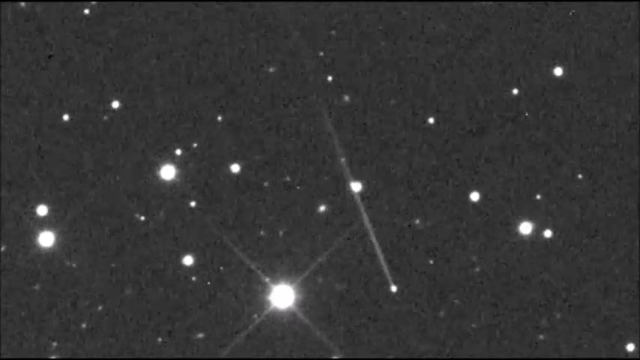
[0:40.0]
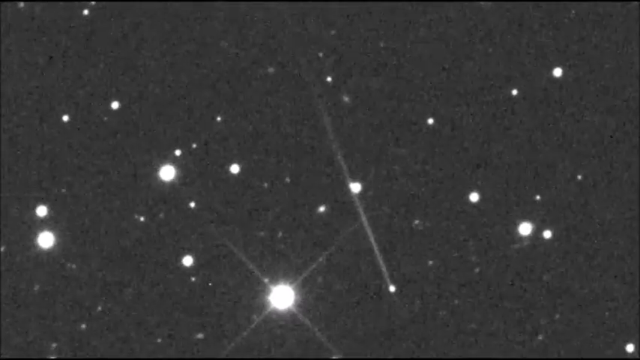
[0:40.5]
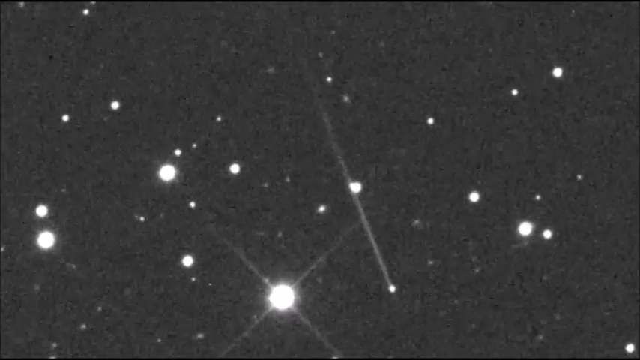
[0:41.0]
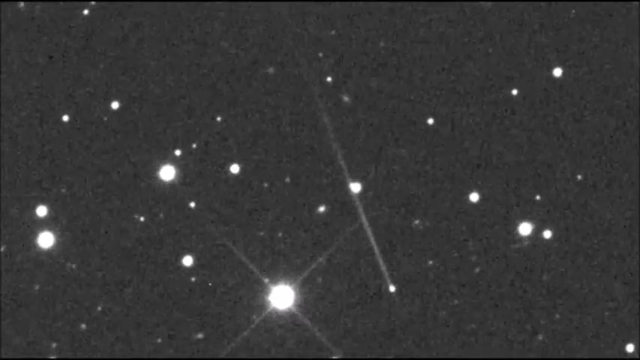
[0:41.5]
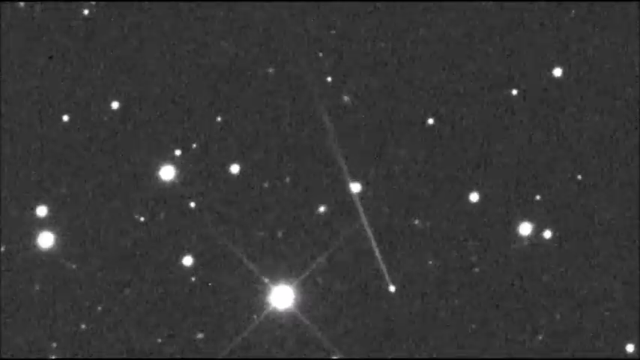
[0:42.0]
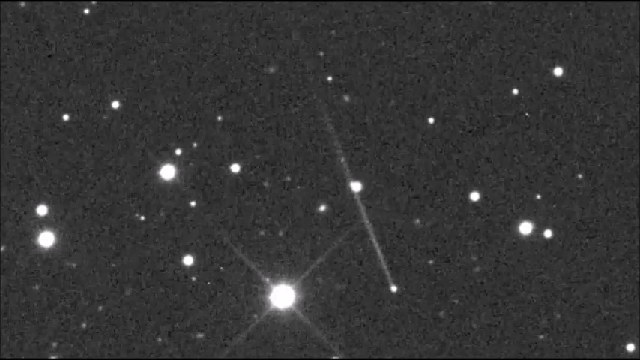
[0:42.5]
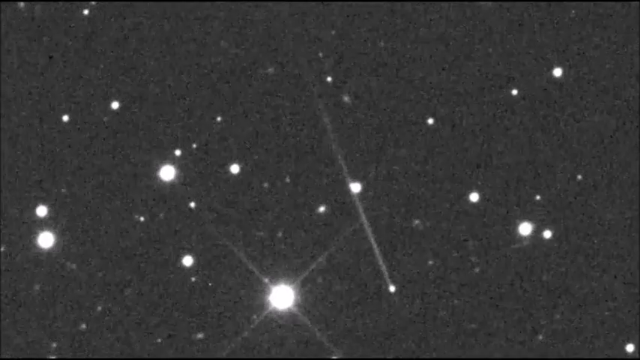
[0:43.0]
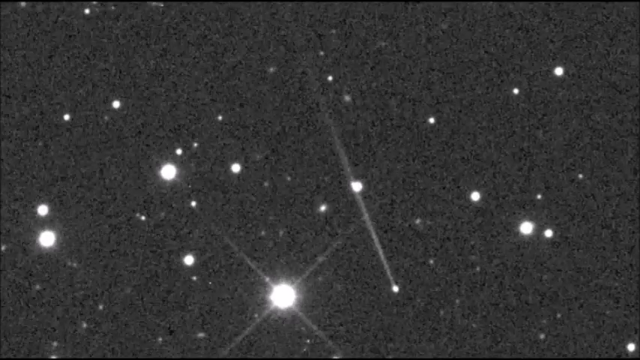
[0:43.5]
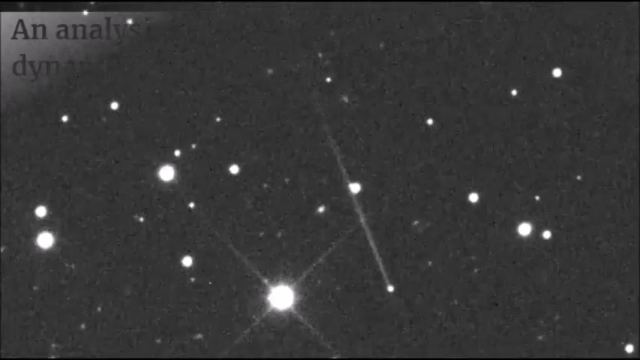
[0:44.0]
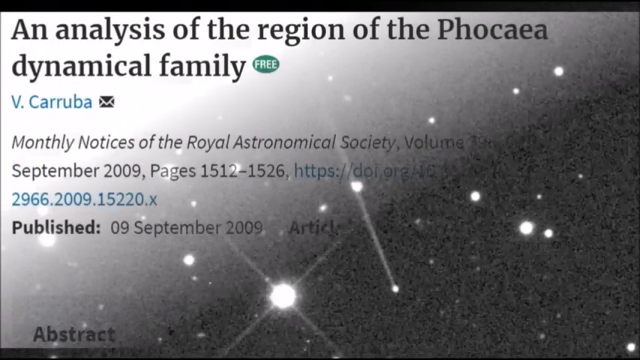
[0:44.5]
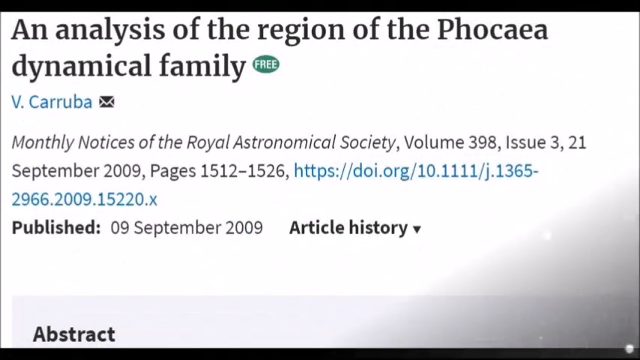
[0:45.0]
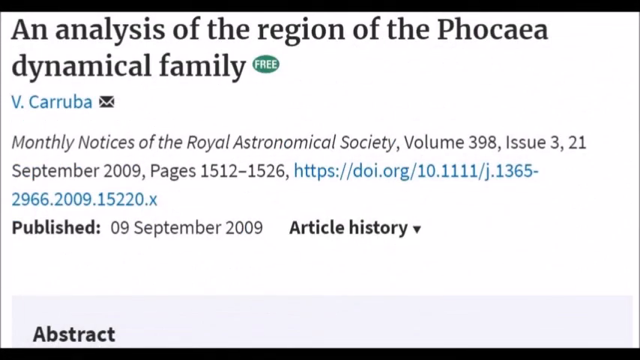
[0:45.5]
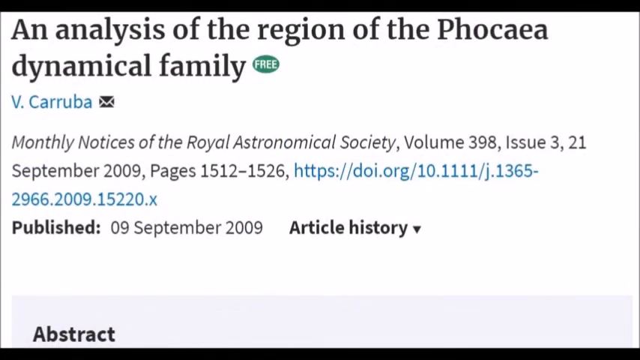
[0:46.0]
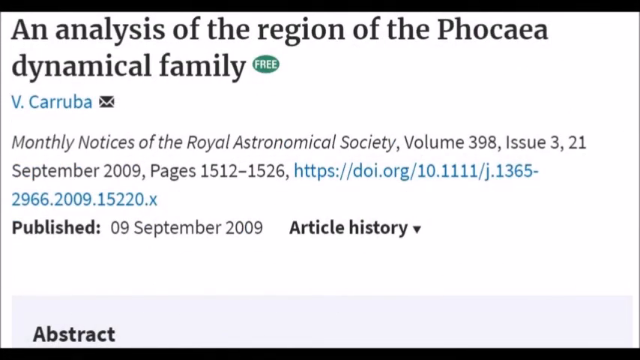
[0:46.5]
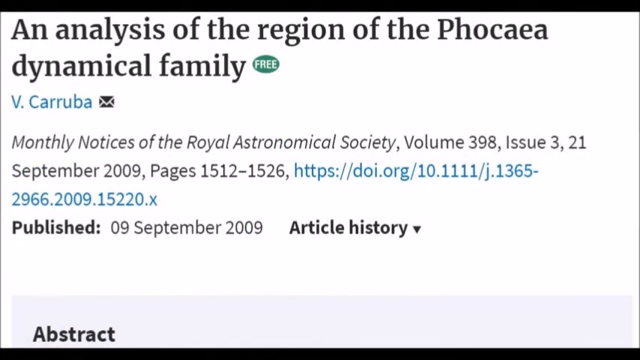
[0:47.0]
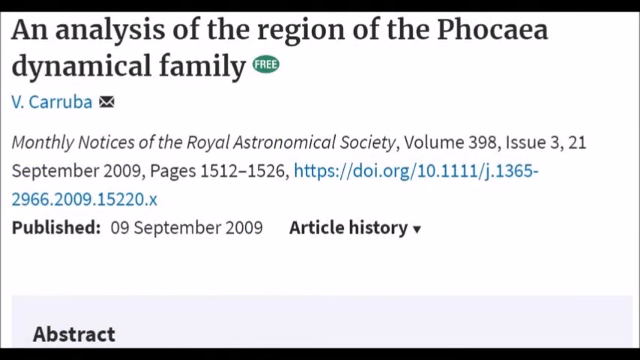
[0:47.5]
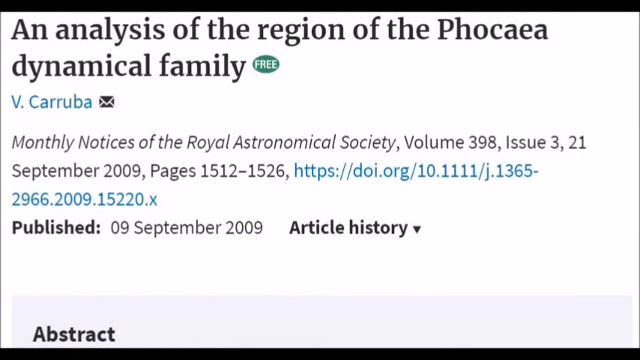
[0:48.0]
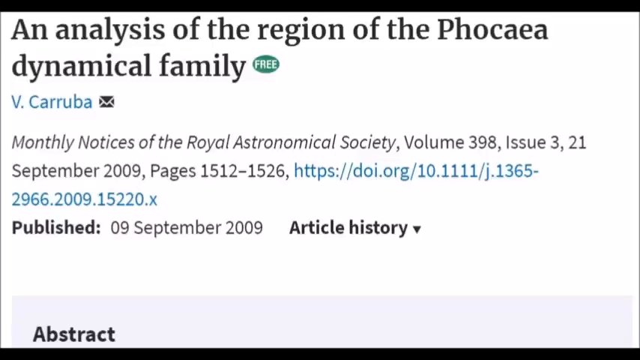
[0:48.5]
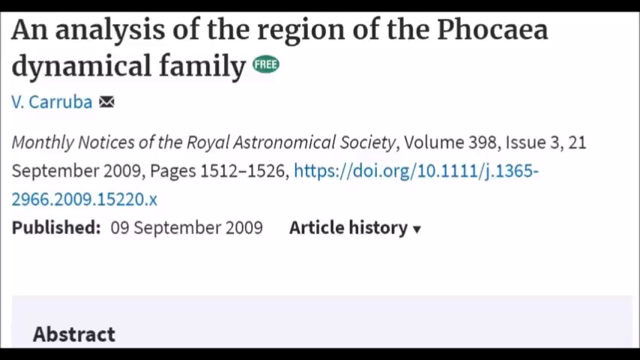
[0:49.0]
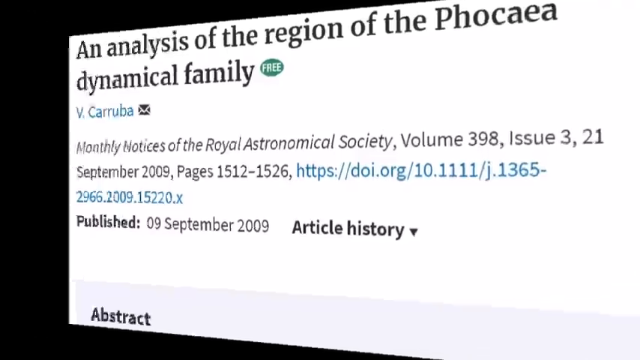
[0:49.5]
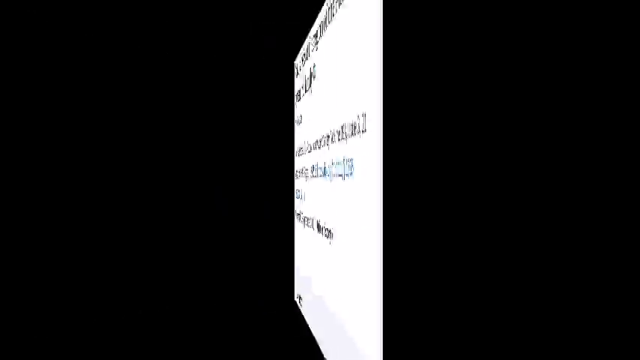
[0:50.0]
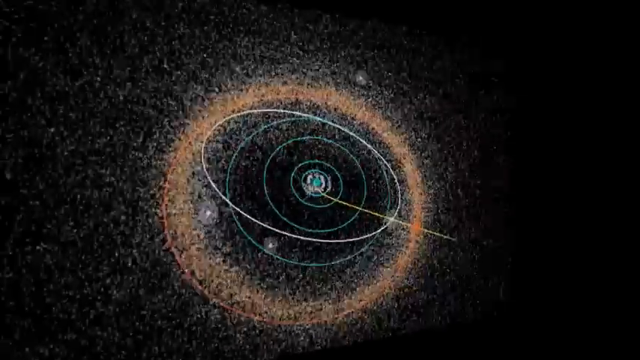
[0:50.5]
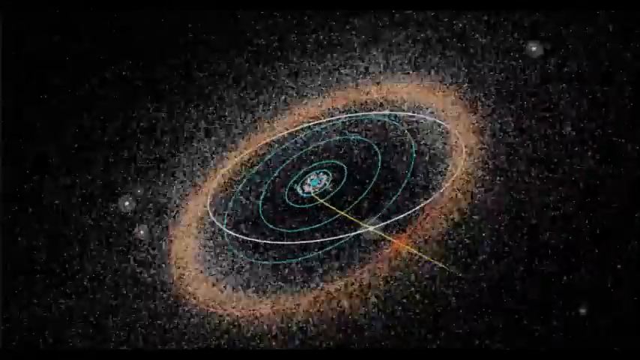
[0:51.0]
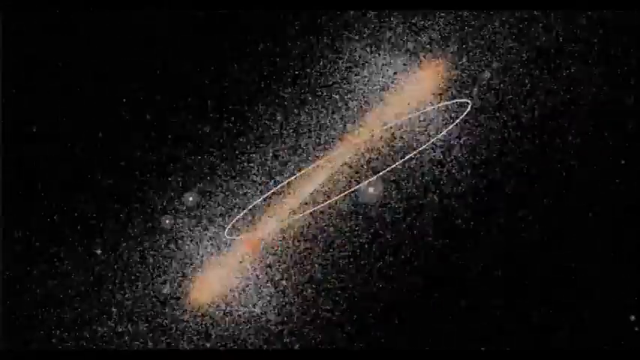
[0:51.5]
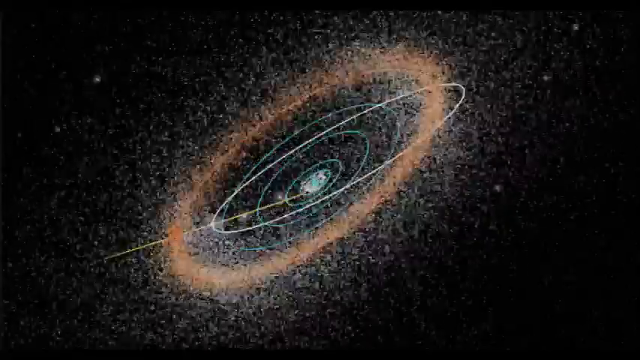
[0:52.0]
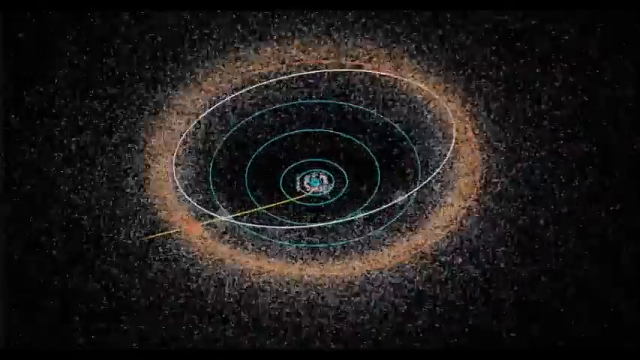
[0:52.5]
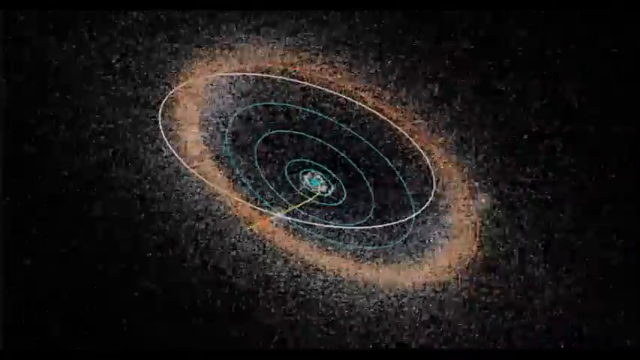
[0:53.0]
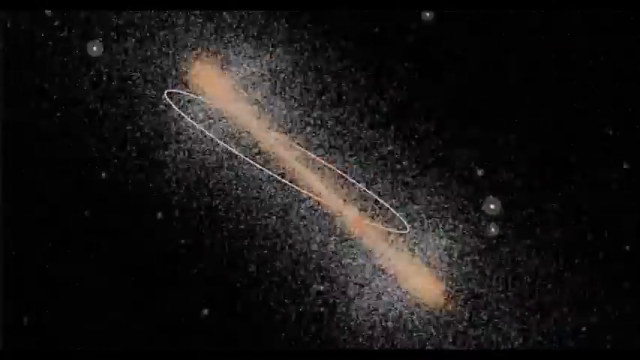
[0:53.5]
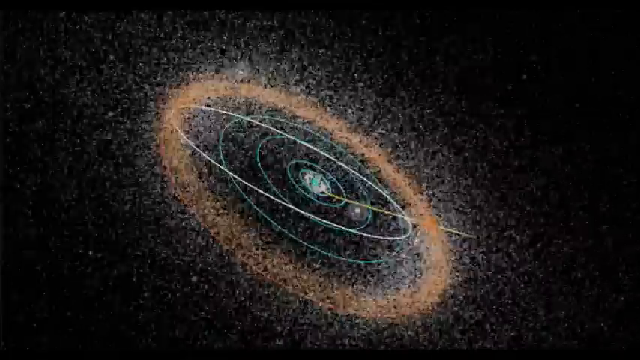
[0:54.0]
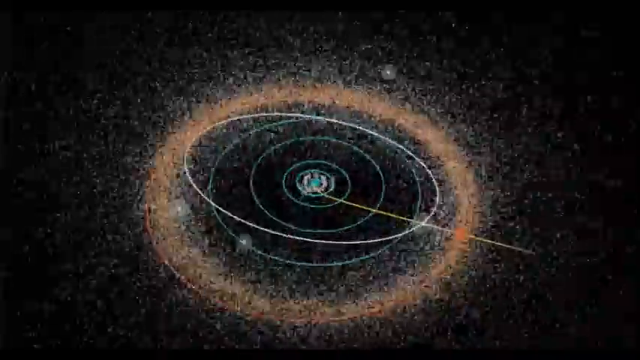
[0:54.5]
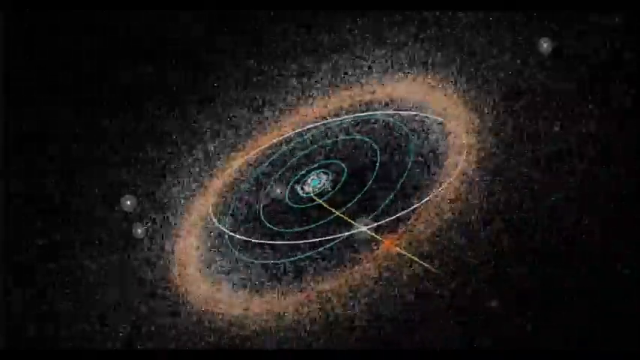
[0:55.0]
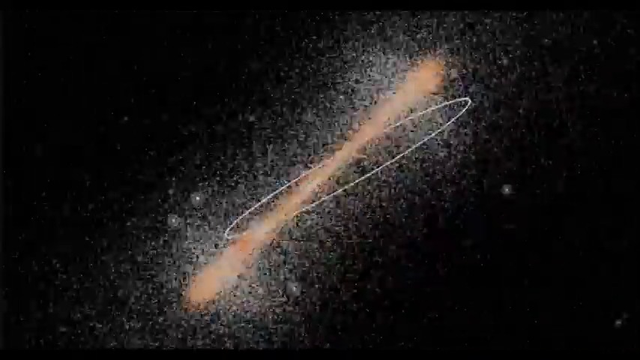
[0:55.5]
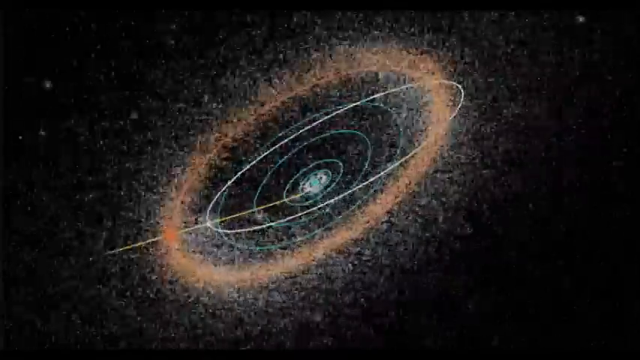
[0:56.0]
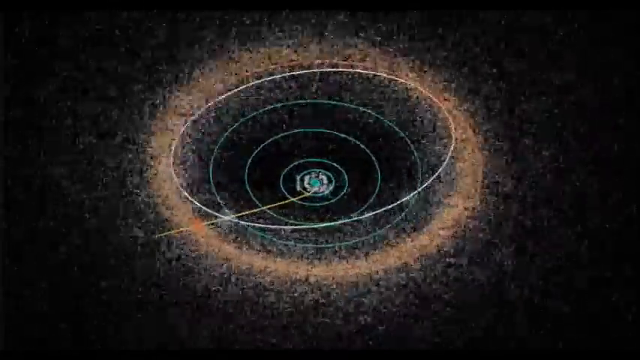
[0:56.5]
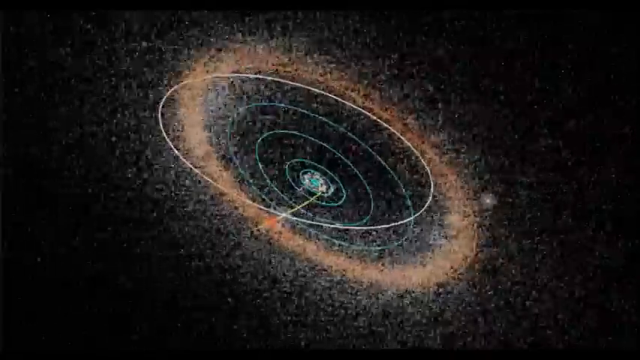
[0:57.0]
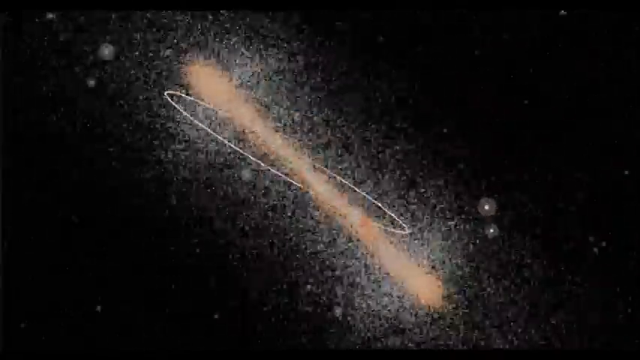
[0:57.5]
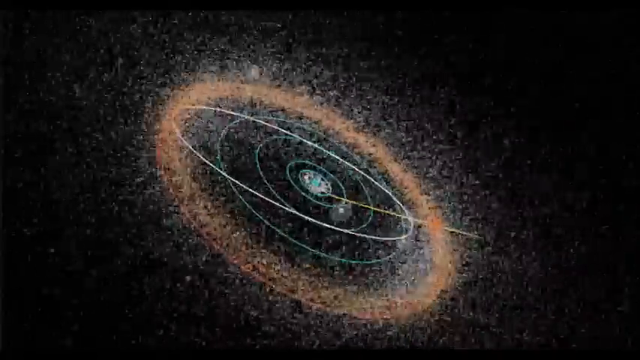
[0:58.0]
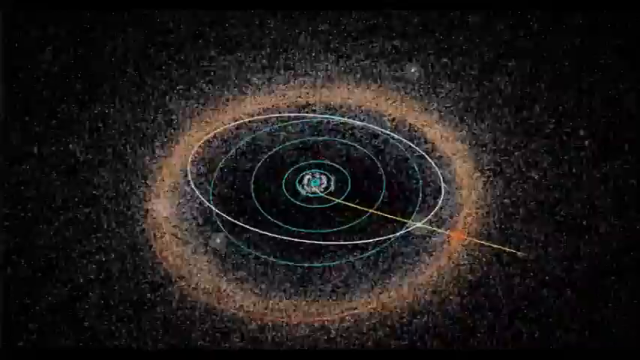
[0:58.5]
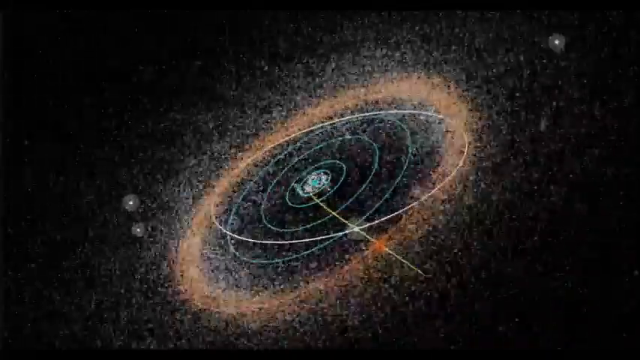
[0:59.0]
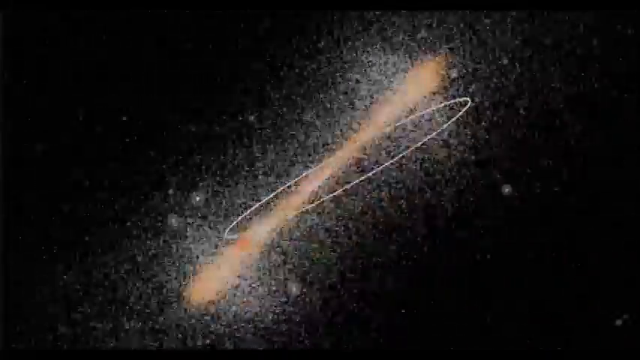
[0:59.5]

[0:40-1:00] A black background has small white dots scattered throughout as stars. At the bottom, just left of center, is a big bright light with rays sticking out, one up-left, one up-right, one down-left and one down-right. To its right, the asteroid is coming down. The asteroid moves slightly left to right, and each time it moves, the black background becomes fuzzy and grayish. A swipe from the top left corner leads to the beginning of an article with a white background and big bold black lettering across the top: "an analysis of the region of Phocaea dynamical family." There is a small green circle that says "free" in white. Beneath it, it says "V Karuba," followed by a small e-mail link. Below that are dates, the number of pages and other information about the article; it says it was published on September 9th, 2029. A swipe flips the right side over onto the left, revealing a black background with a solar system spinning in a circle. It is black in the center, with a thin white line going around like rings, and the outer rings are pinkish-orange and fall off like small particles as it rotates from right to left. It is a little closer to the camera at the bottom than at the top, so it leans diagonally.